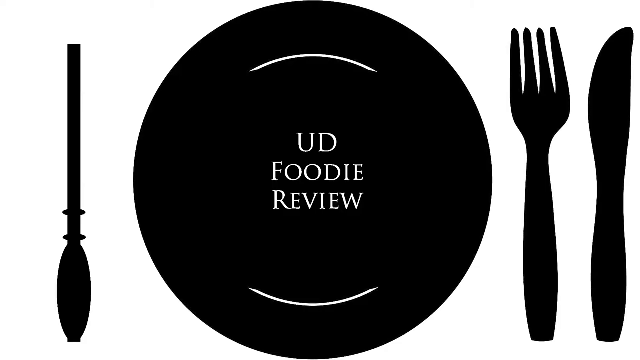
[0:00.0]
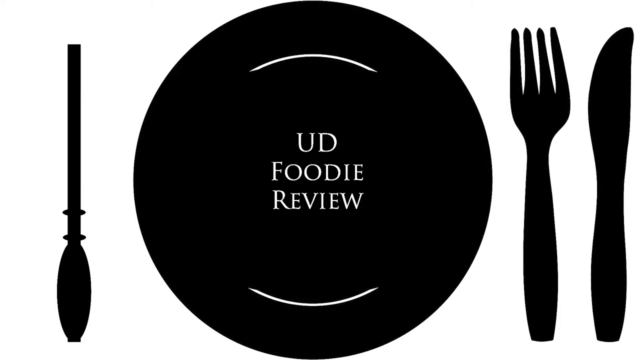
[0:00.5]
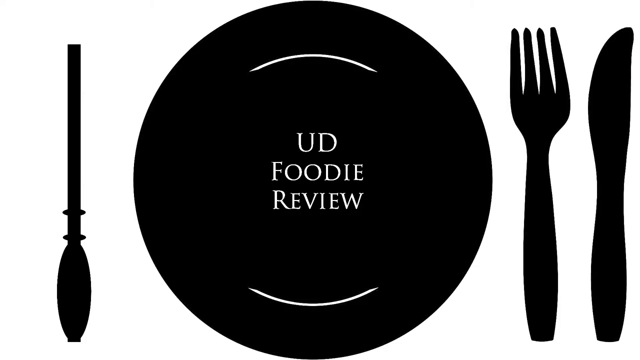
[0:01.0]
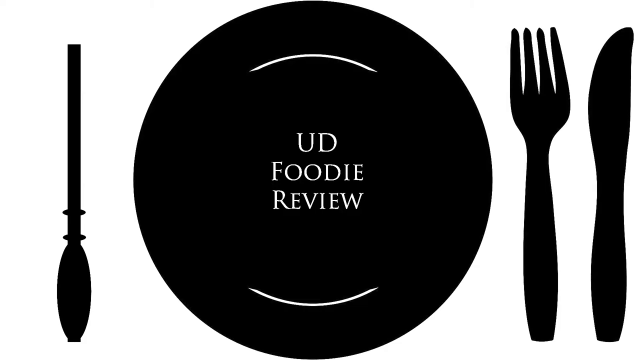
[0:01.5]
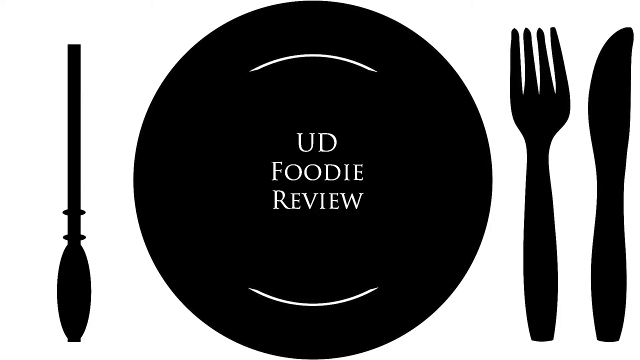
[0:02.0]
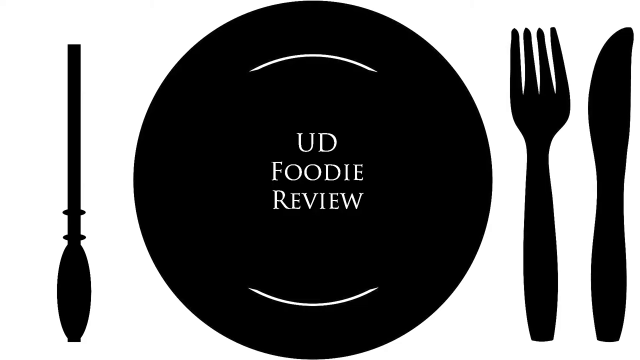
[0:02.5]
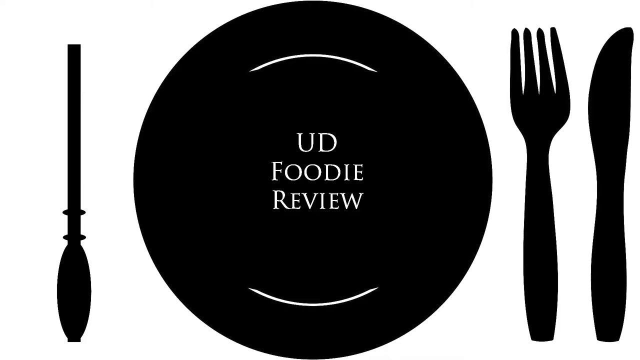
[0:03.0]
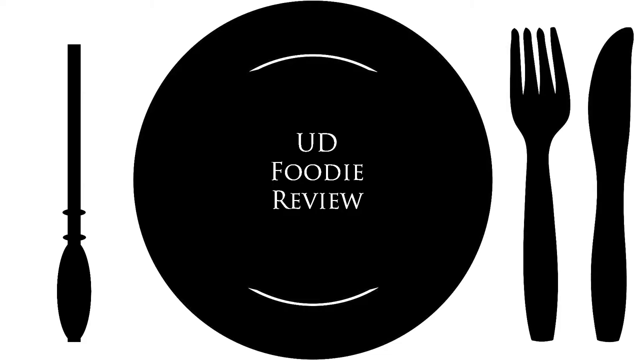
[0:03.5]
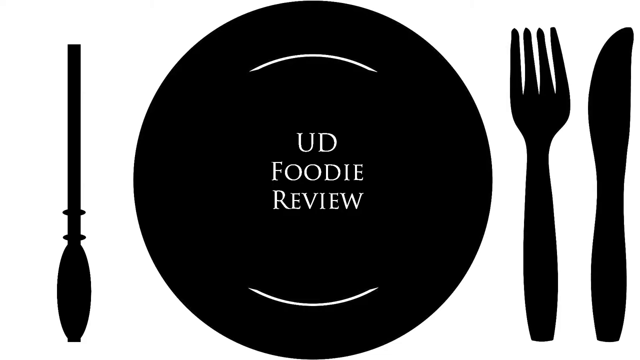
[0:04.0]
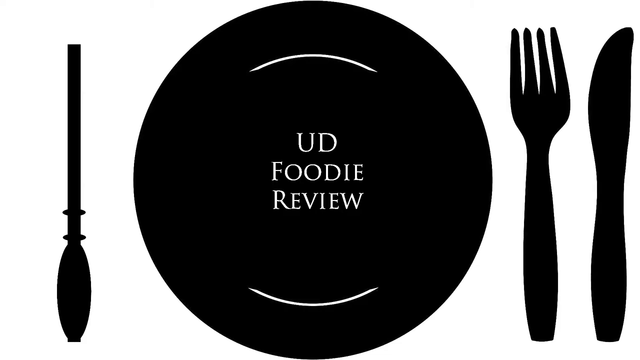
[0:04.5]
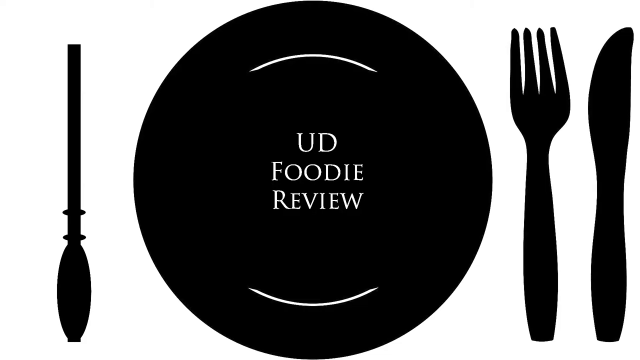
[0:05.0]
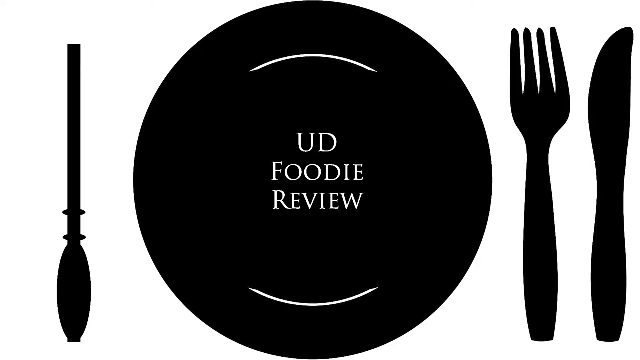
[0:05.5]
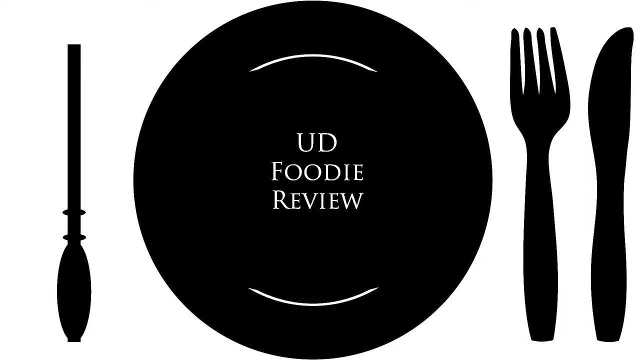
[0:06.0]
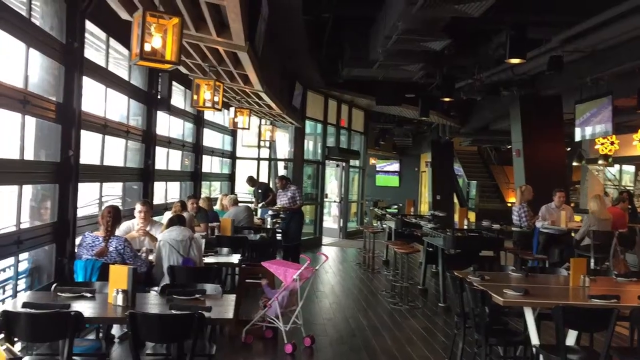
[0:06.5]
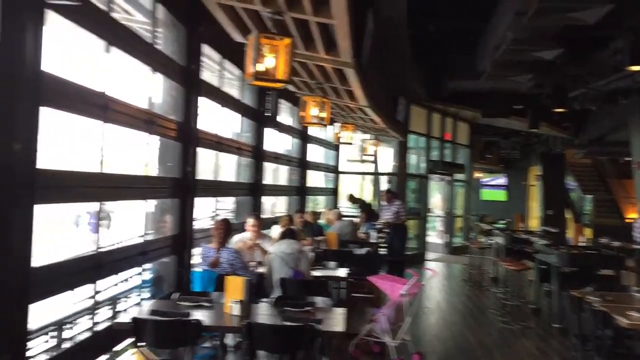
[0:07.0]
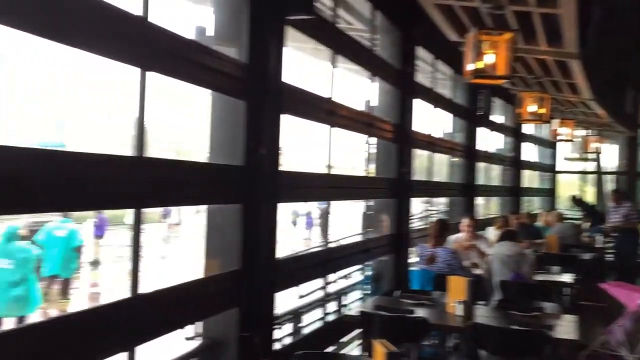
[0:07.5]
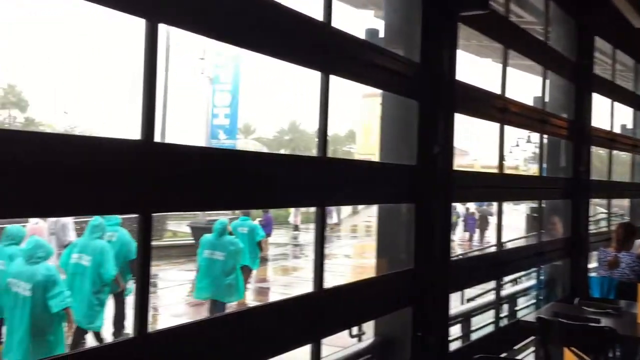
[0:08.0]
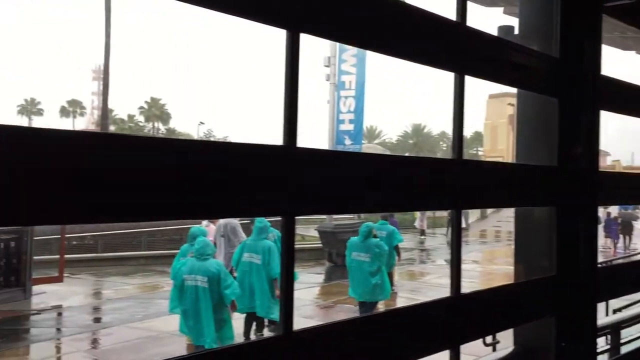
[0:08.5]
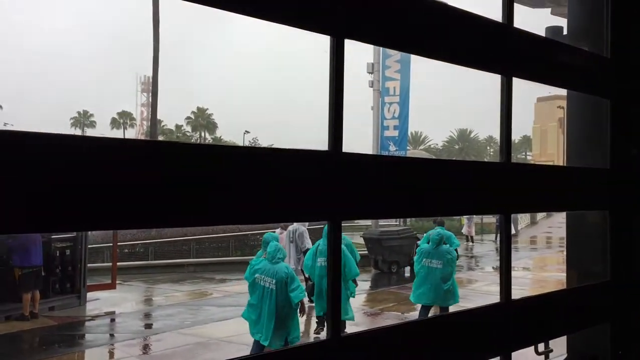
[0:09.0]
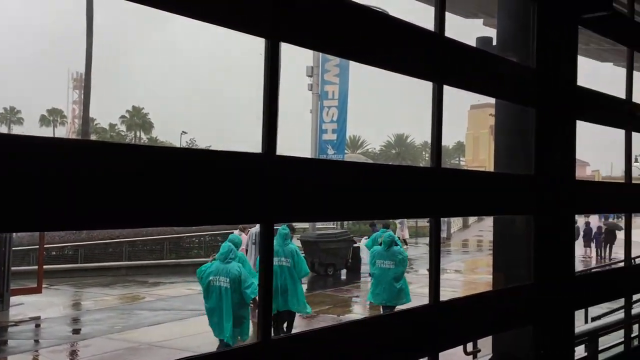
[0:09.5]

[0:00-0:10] Against a white background are shadow figures of several objects. On the left is what looks like a wooden spoon, spoon end down, in a vertical position. To the right of it, in the center, is a circular plate with "UD Foodie Review" written in its center in white capital letters. To the right of that, a fork stands vertically with its tines in the air, and to the right of the fork a knife stands the same way, just slightly to the right. The video then moves to an indoor scene with what looks like a wood floor, a row of tables on the right, and a row of tables on the left by a window.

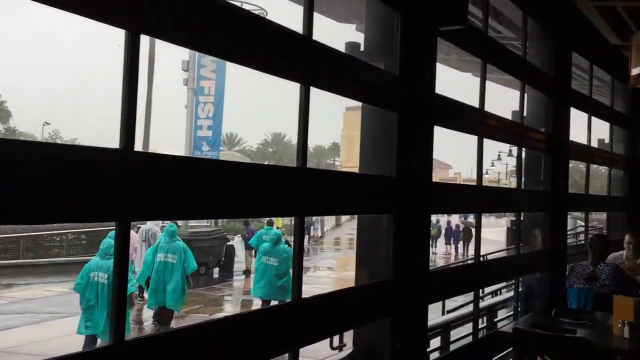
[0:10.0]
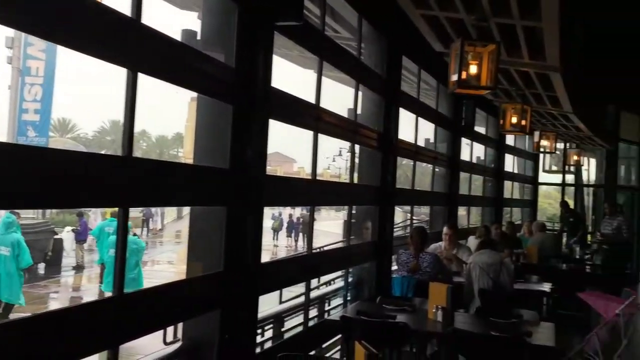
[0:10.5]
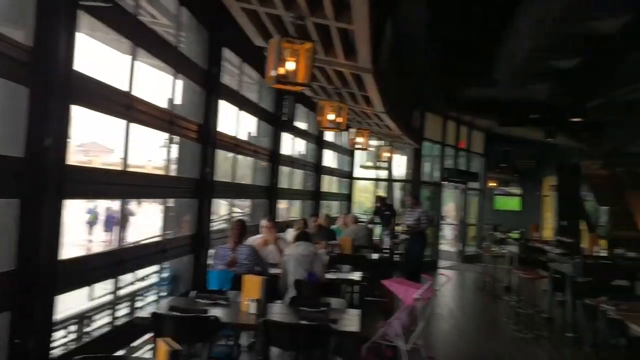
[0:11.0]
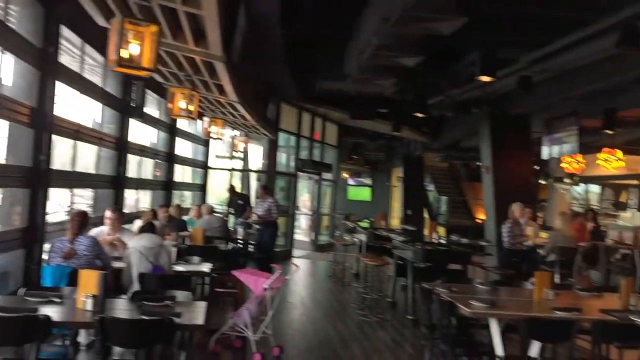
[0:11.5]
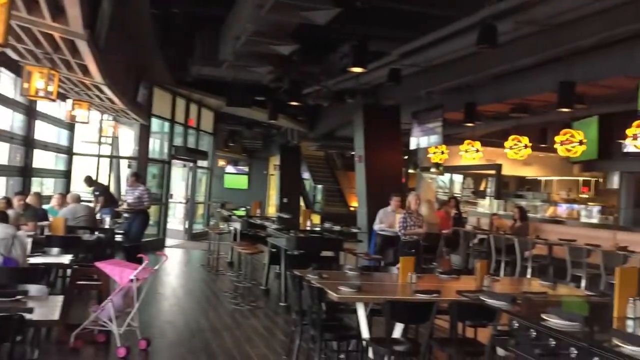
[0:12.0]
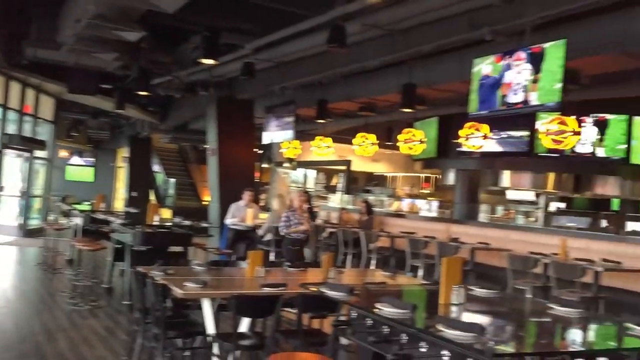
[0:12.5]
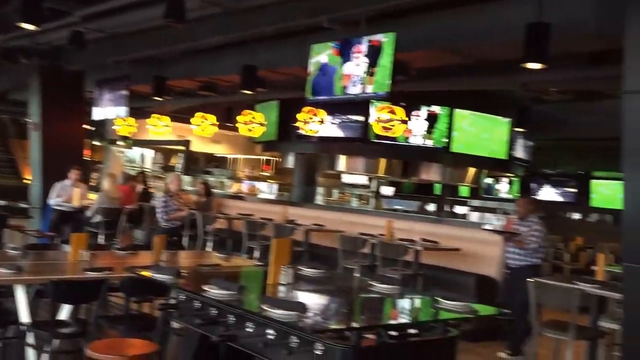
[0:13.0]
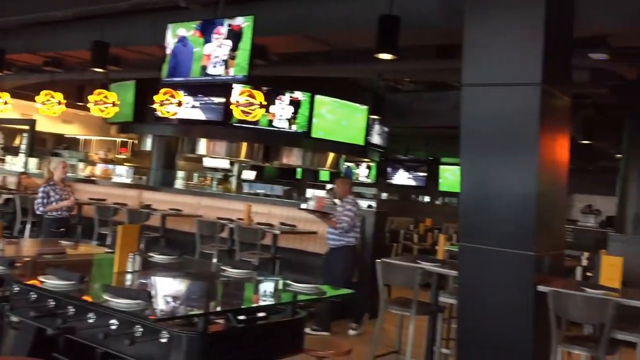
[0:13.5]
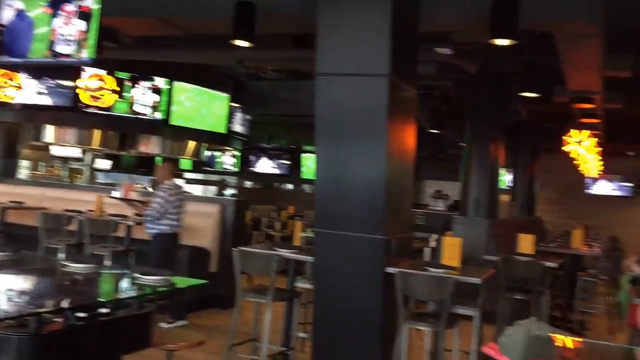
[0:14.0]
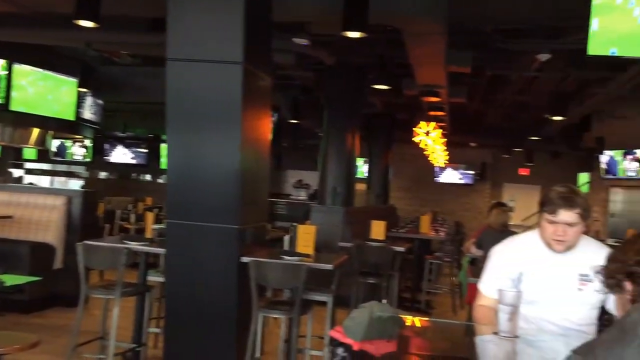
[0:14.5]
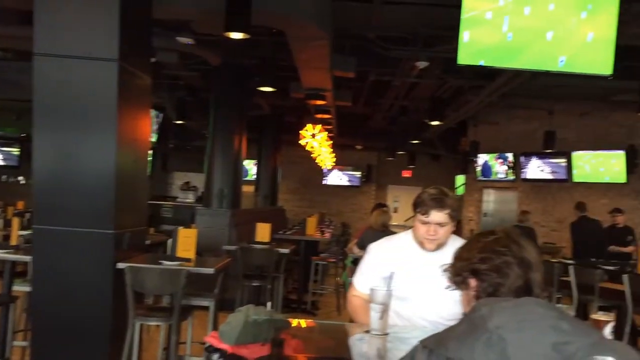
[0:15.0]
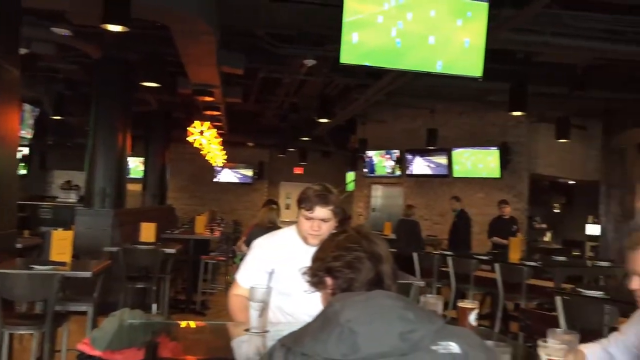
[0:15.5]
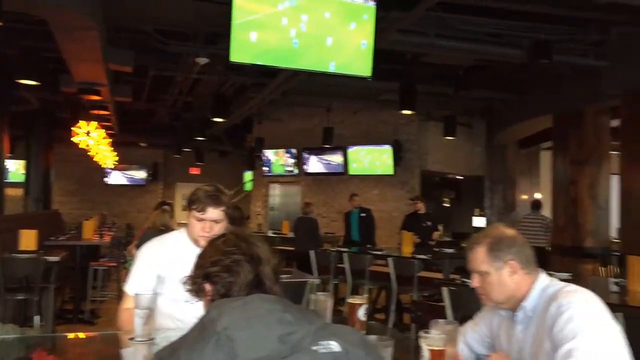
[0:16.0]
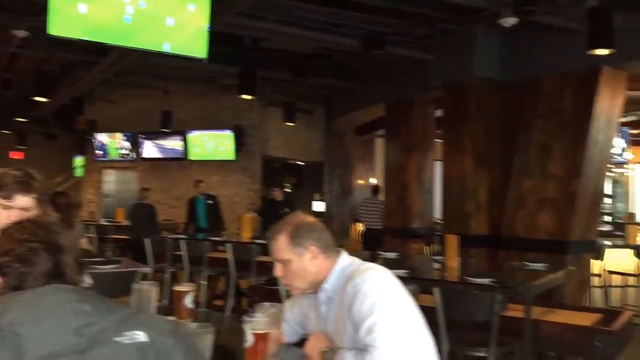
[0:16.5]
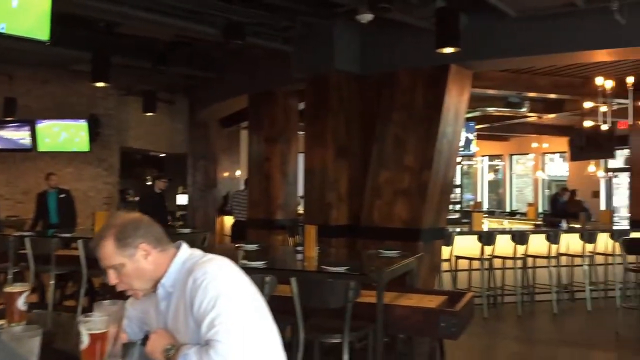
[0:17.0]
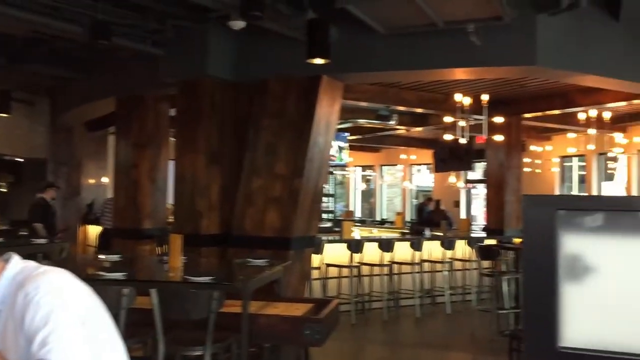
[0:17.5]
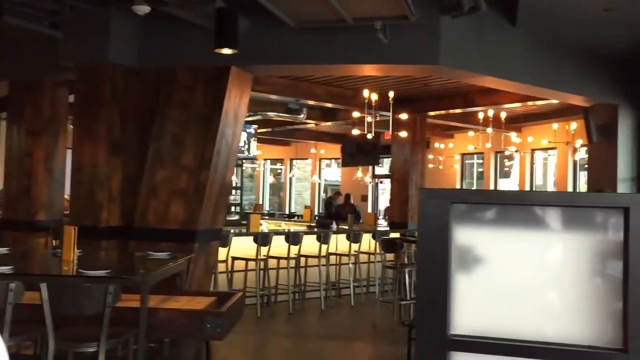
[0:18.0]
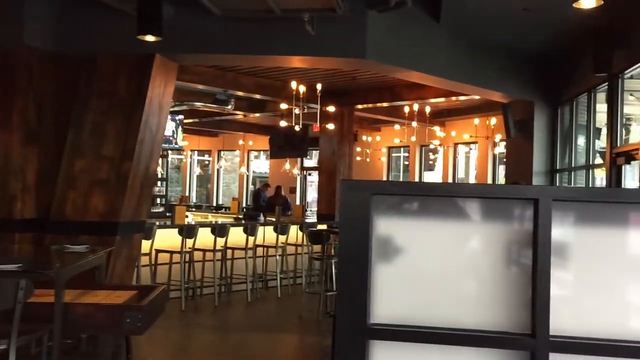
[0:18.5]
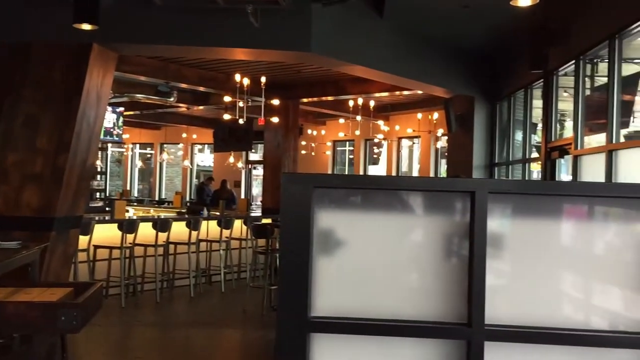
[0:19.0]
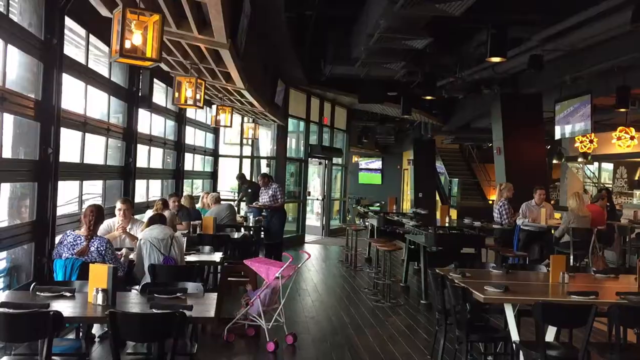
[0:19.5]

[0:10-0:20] The frame is wider than it is tall. A wall of windows starts around the lower left, with a window crosspiece running to about a third of the way up on the right; everything above it is windows, as is one row below the crosspiece. Through the first set of windows on the left, several people in teal ponchos are walking toward the upper right. The sky outside is kind of blue-gray. At the table in the lower right, a group of people seems to be sitting in the shadows. It is very dark inside, and not much can be seen.